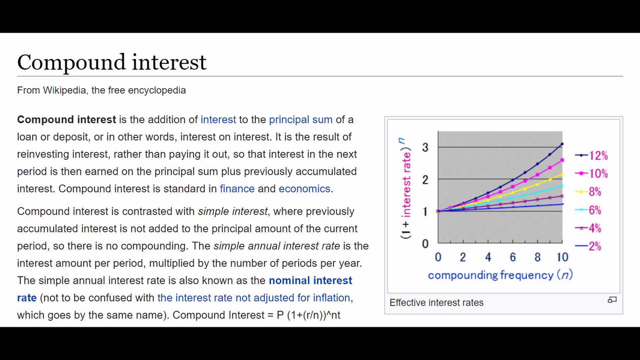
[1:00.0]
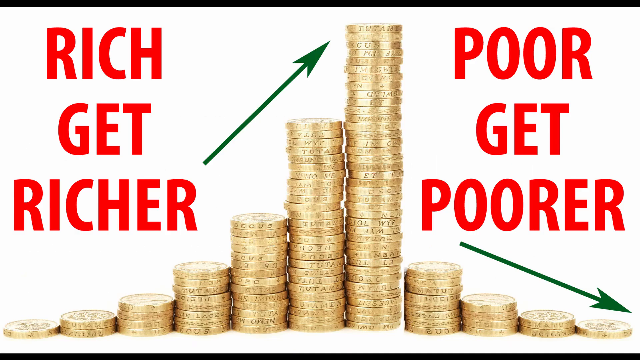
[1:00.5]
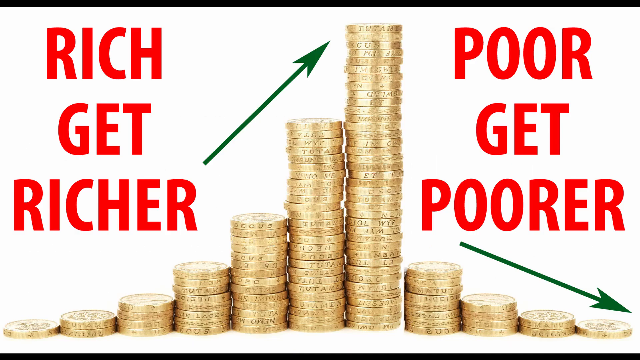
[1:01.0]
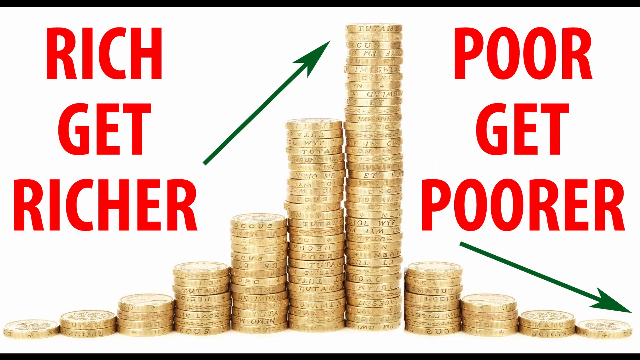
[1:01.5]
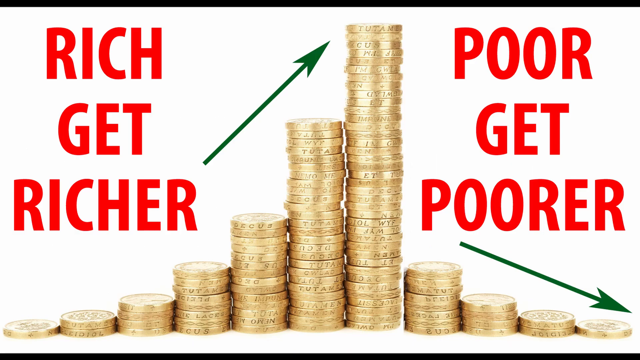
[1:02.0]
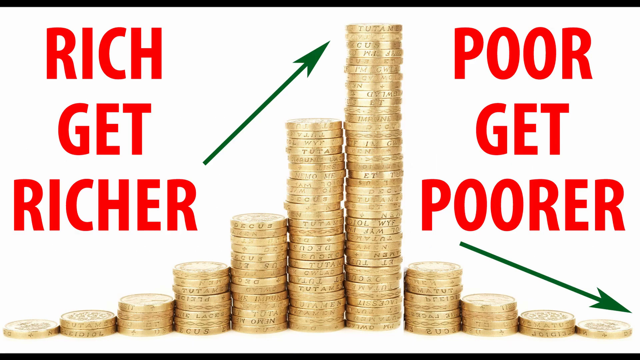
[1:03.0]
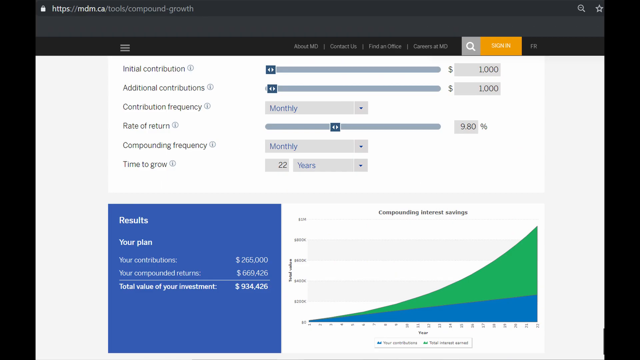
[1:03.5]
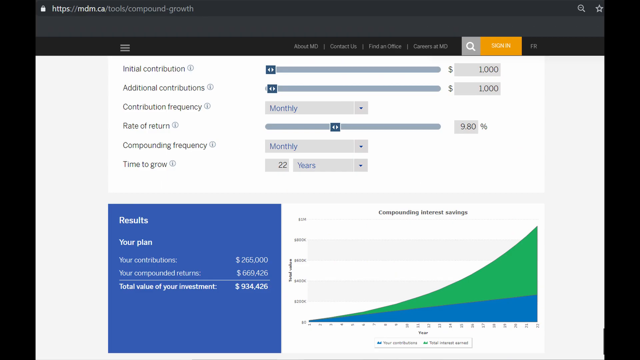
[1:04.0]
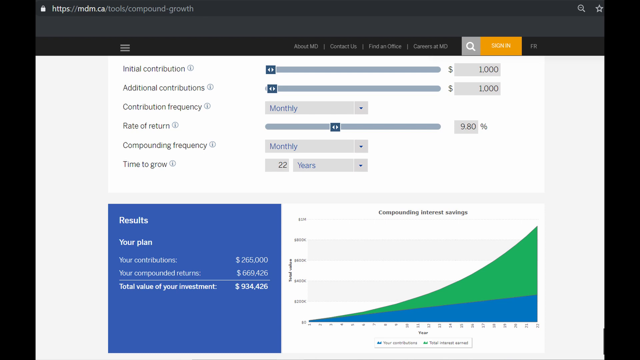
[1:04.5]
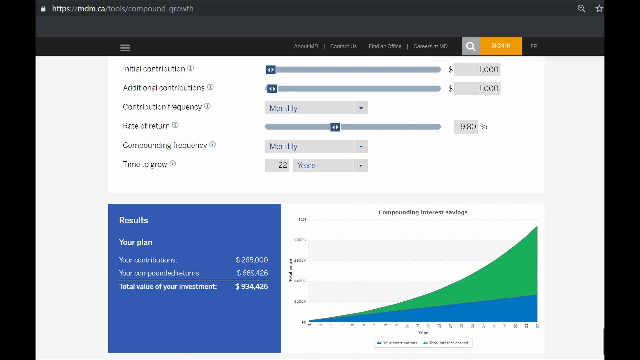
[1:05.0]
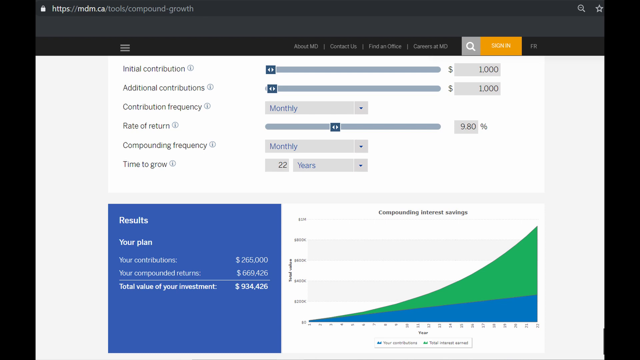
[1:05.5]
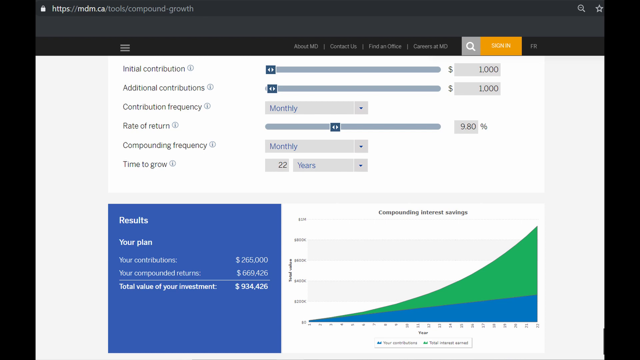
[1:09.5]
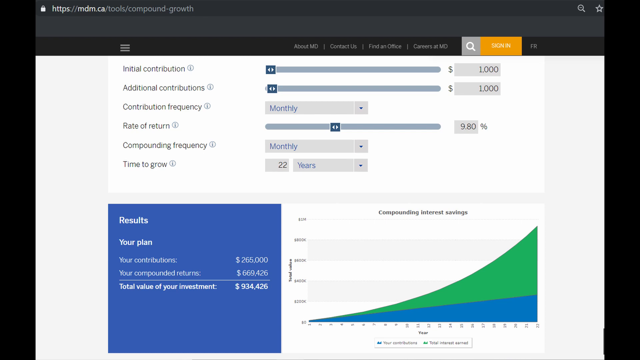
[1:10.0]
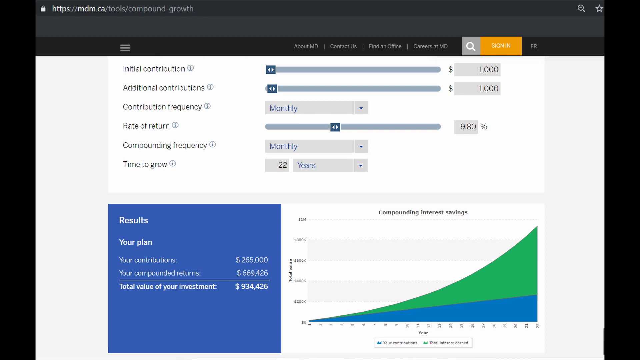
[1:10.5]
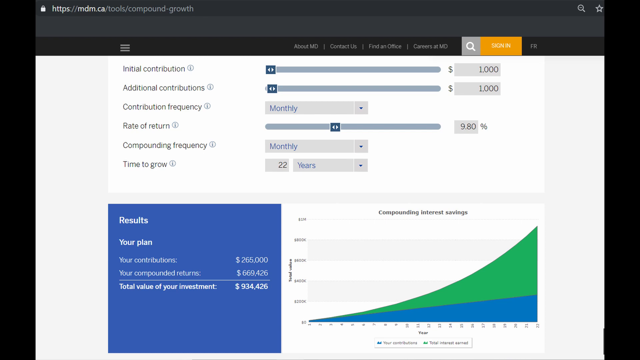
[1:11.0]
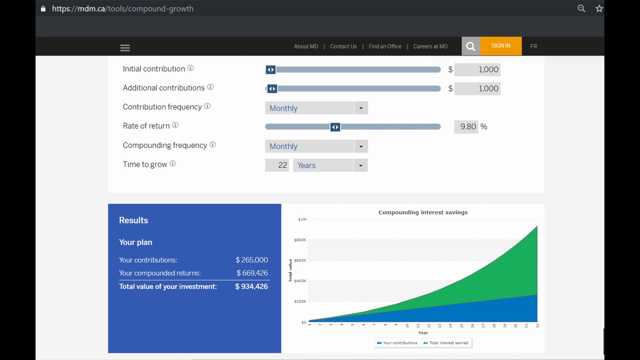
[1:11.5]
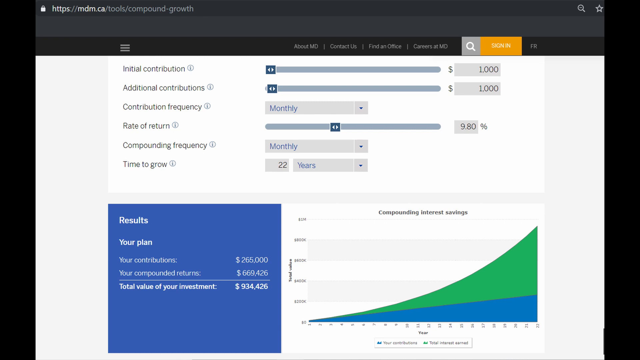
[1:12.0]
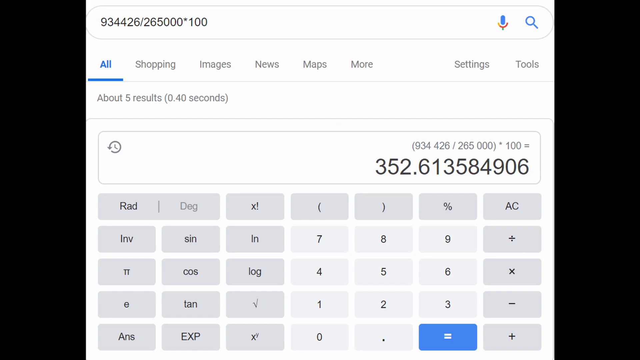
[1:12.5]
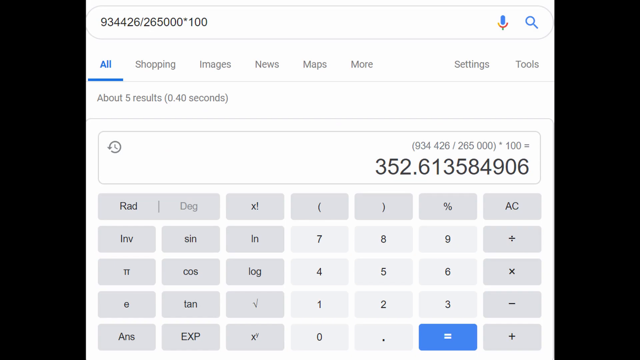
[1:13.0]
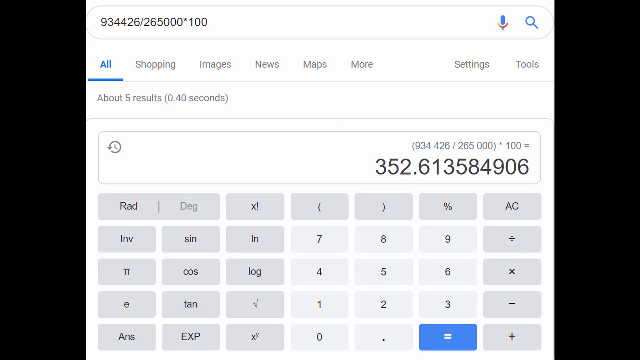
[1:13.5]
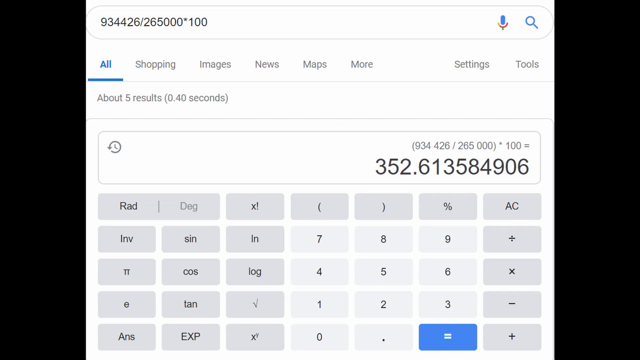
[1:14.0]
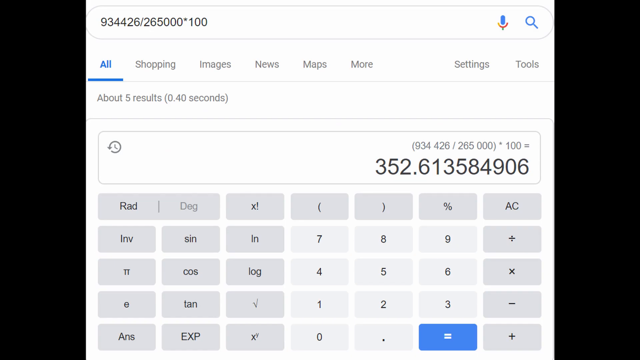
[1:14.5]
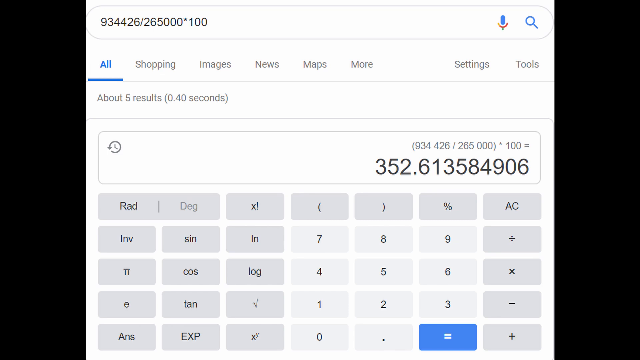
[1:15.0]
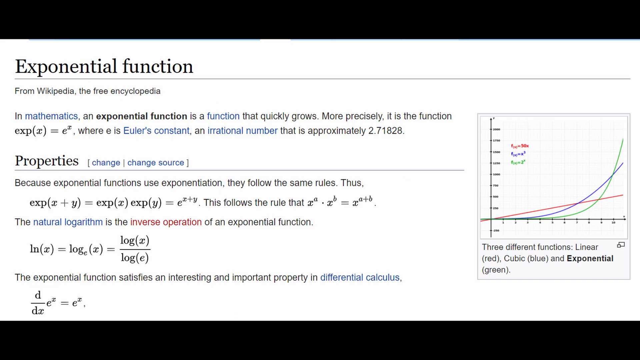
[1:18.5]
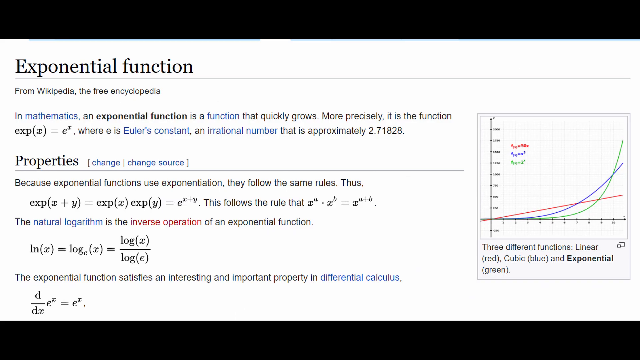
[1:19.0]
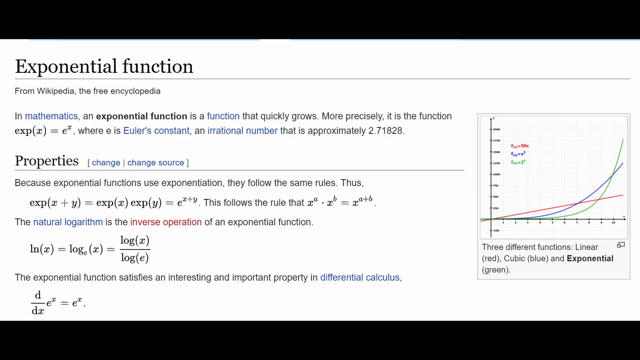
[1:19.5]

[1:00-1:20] The same Wikipedia page stays on screen. Then an image of a pile of money appears, shaped like a normal distribution: it starts with one coin, grows to a pile of approximately 30 or 40 coins, and goes back down to one coin. There are two texts: the one on the left says "the rich become richer" and the one on the right says "the poor become poorer." Another web page follows, with green and blue graphs that rise in an incremental curve. Several parameters configure the graph: Initial Contribution, Additional Contributions, Contribution Frequency, Rate of Return, Compounding Frequency and Time to Grow, each with values already entered. A calculation made above produces the result. Finally, a Wikipedia page about the Exponential Function appears, with its description and images on one side.